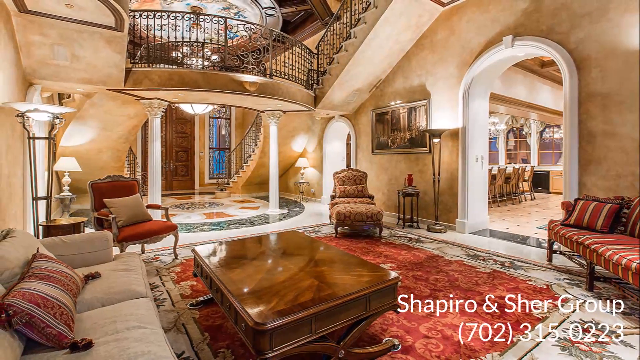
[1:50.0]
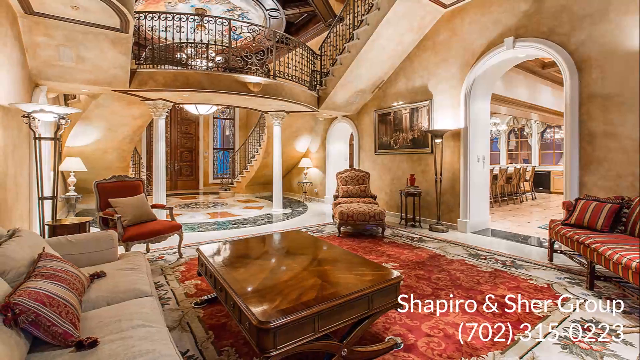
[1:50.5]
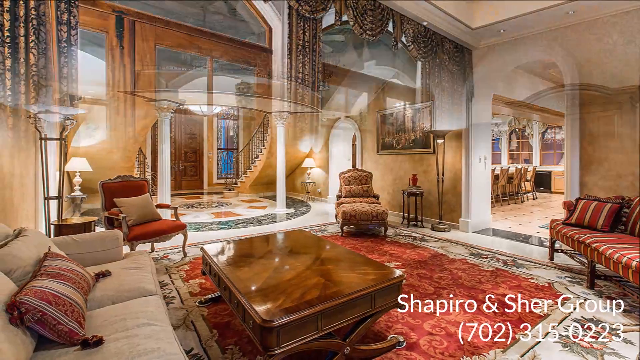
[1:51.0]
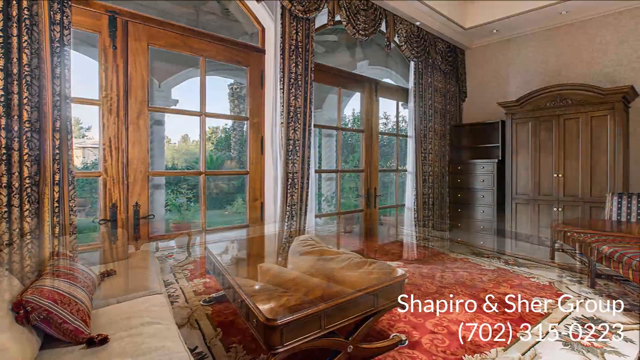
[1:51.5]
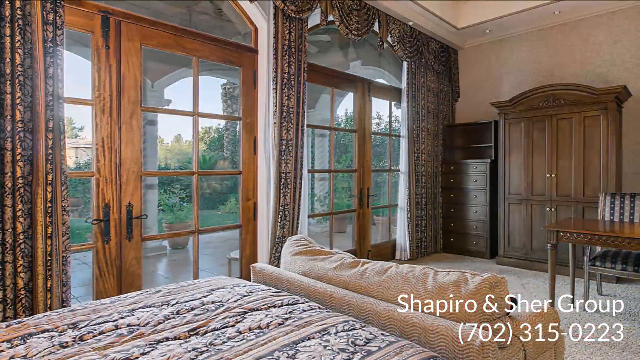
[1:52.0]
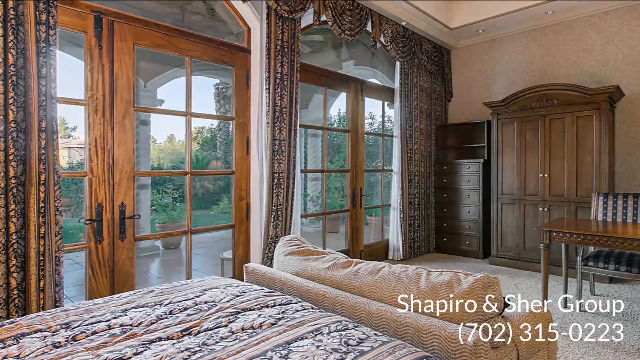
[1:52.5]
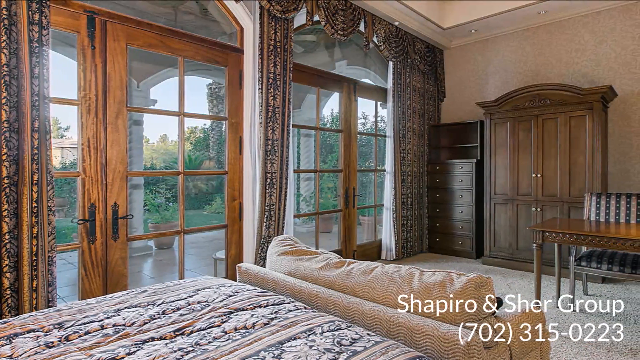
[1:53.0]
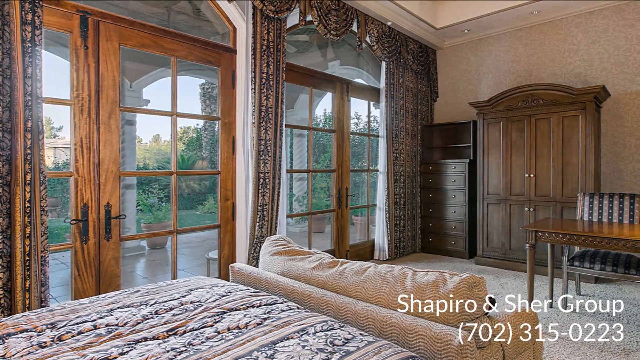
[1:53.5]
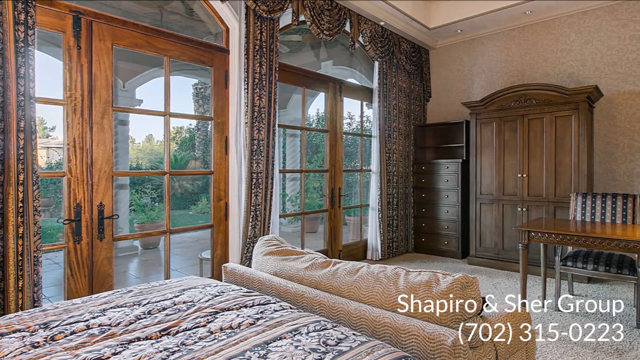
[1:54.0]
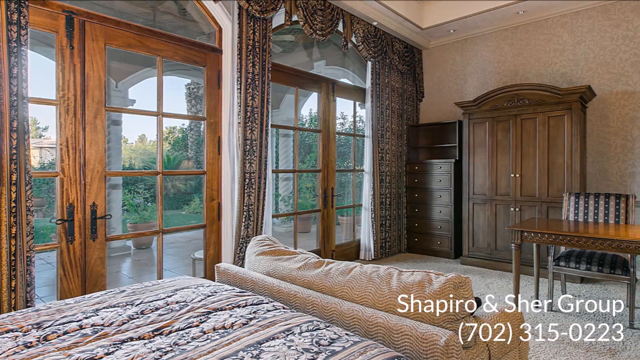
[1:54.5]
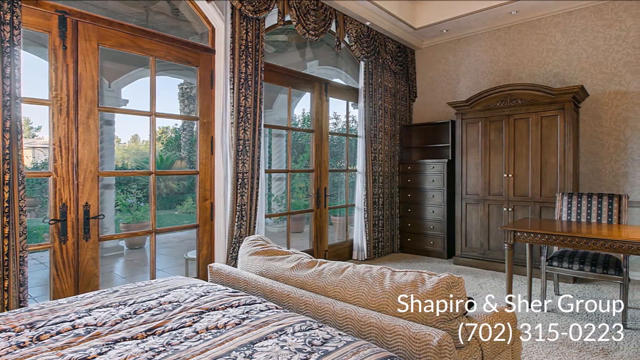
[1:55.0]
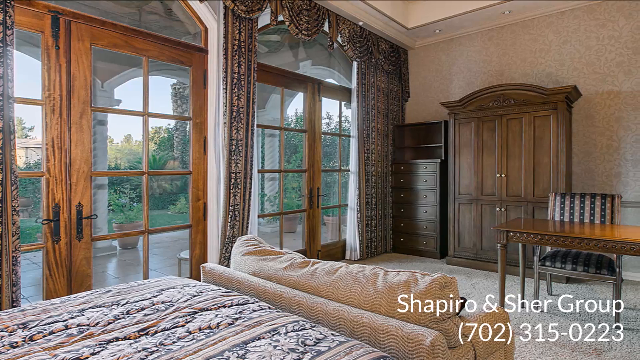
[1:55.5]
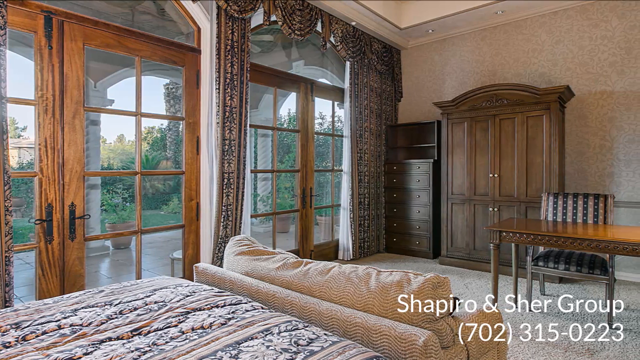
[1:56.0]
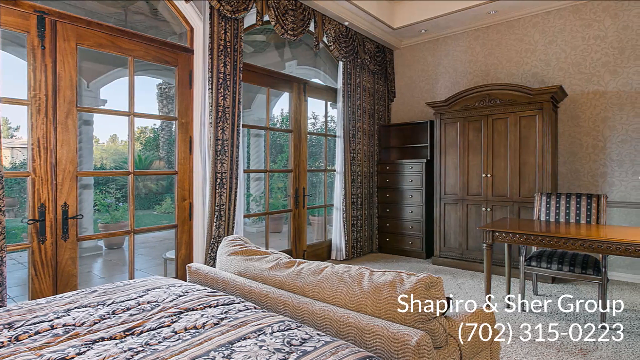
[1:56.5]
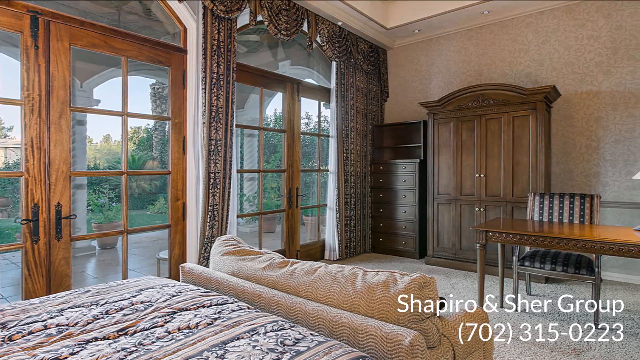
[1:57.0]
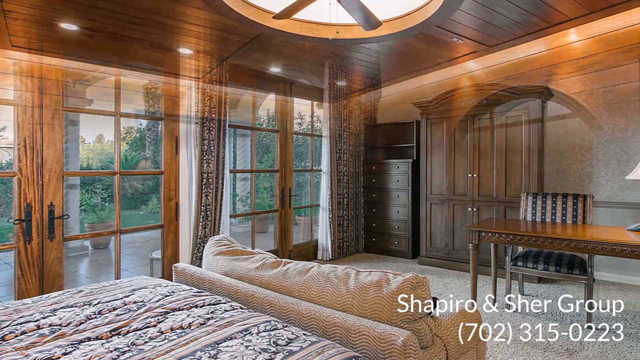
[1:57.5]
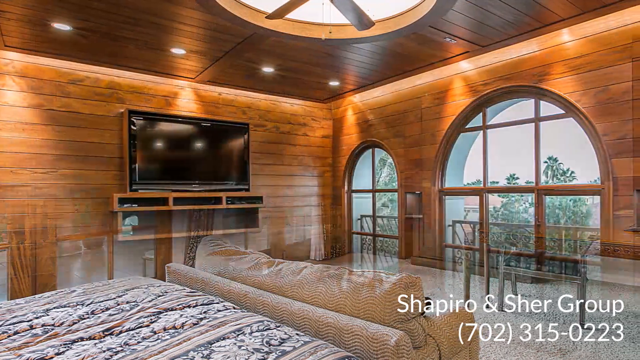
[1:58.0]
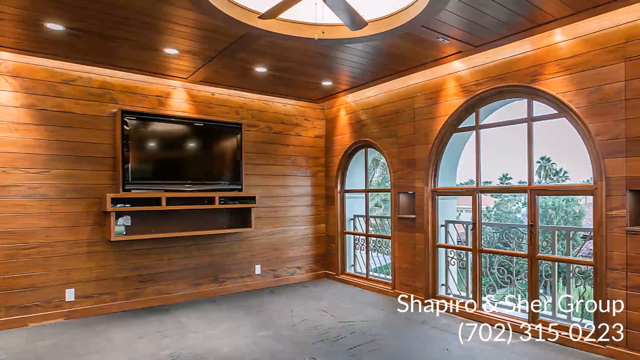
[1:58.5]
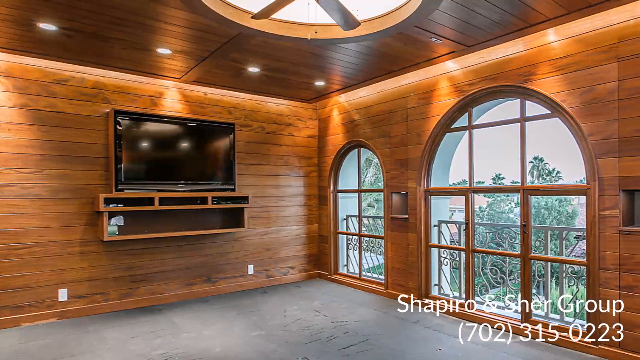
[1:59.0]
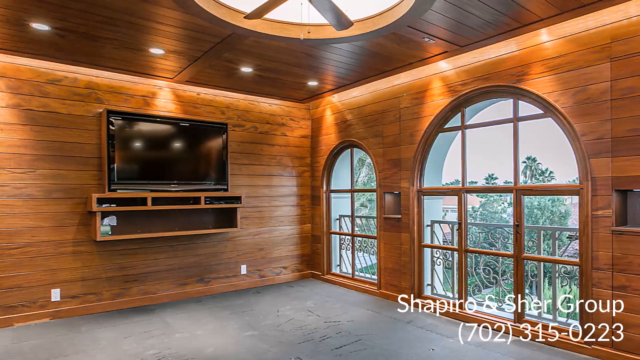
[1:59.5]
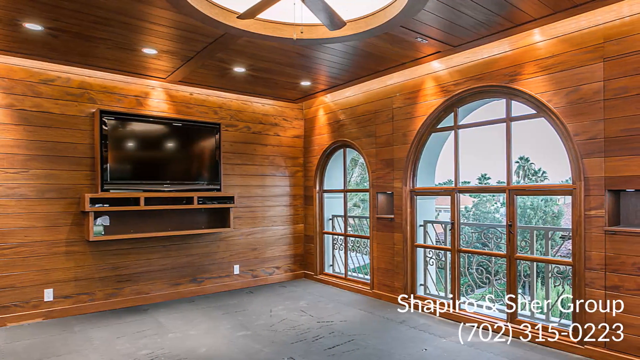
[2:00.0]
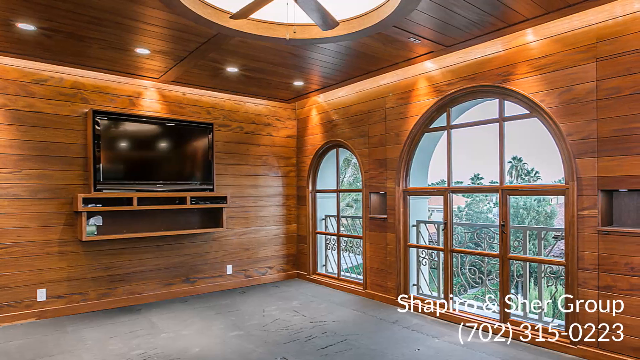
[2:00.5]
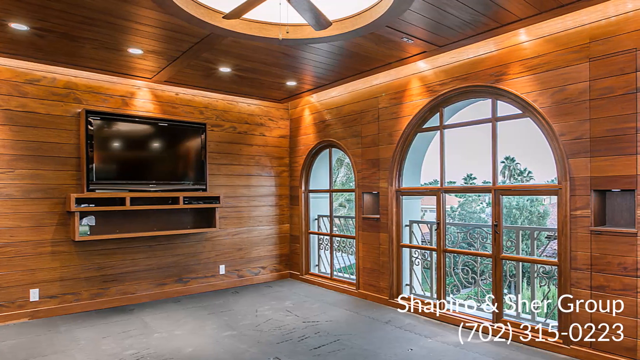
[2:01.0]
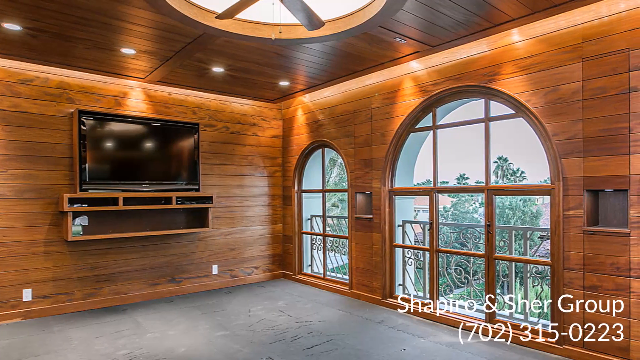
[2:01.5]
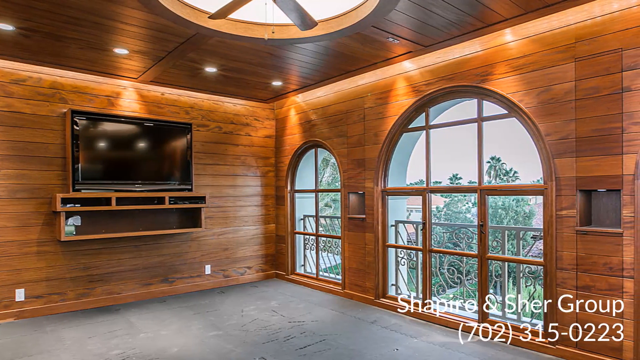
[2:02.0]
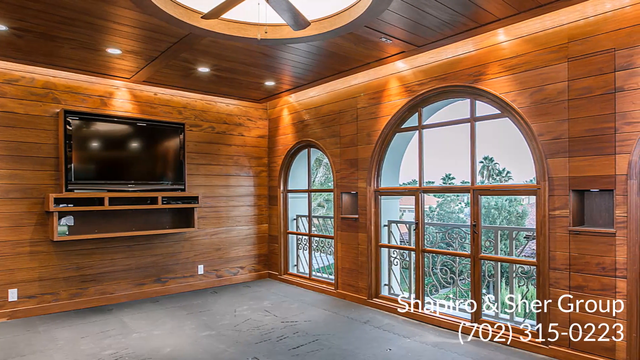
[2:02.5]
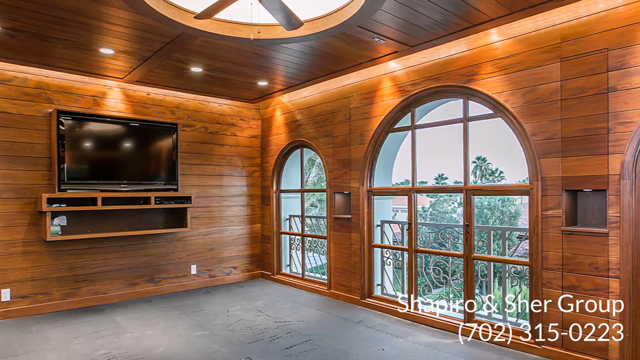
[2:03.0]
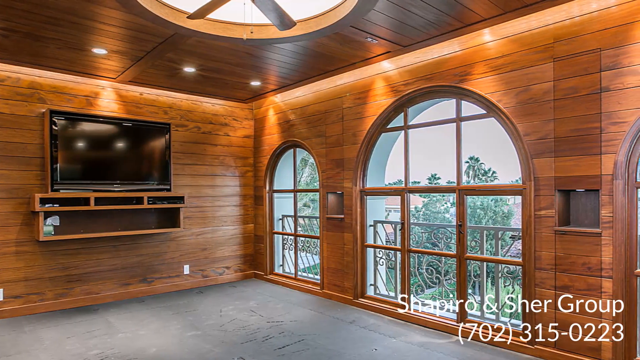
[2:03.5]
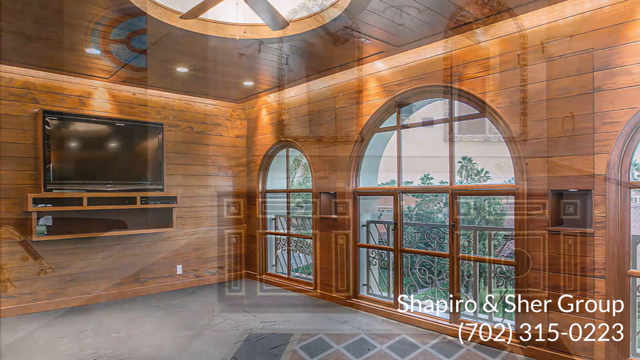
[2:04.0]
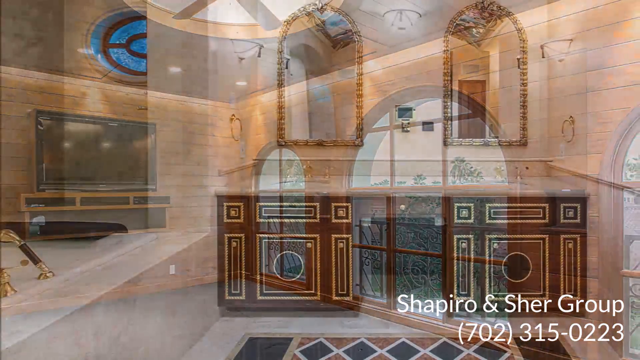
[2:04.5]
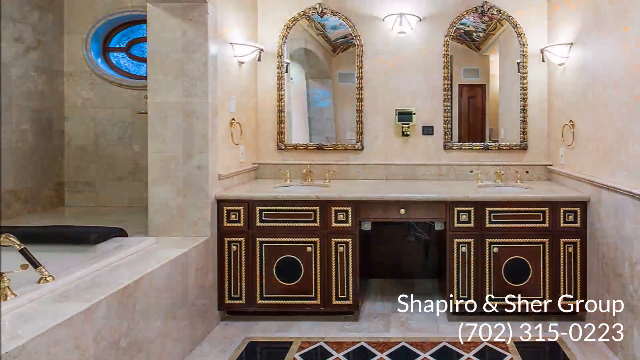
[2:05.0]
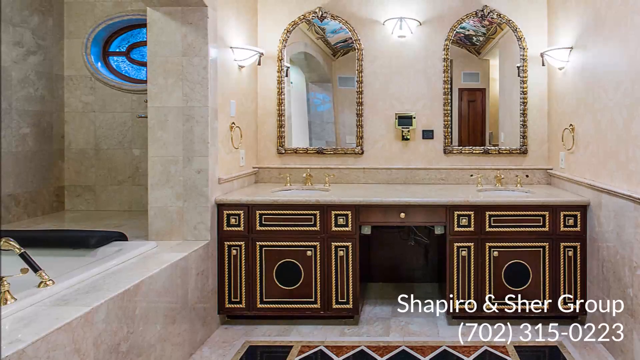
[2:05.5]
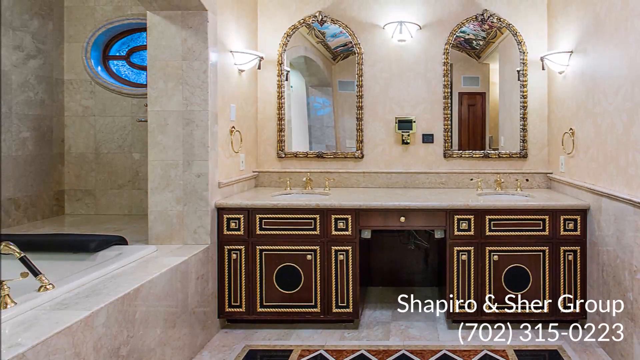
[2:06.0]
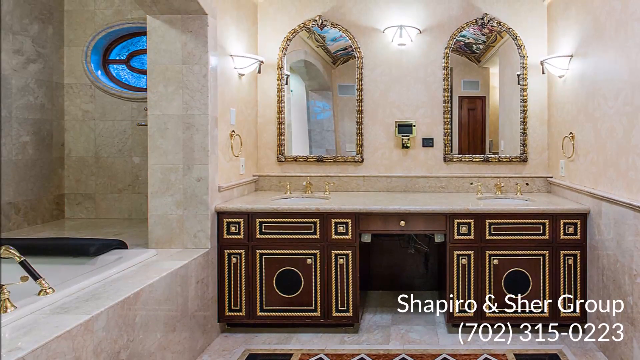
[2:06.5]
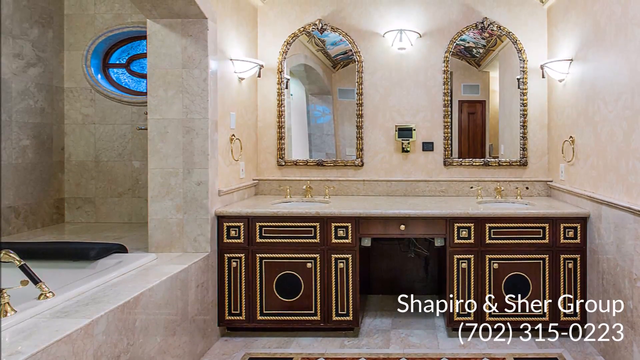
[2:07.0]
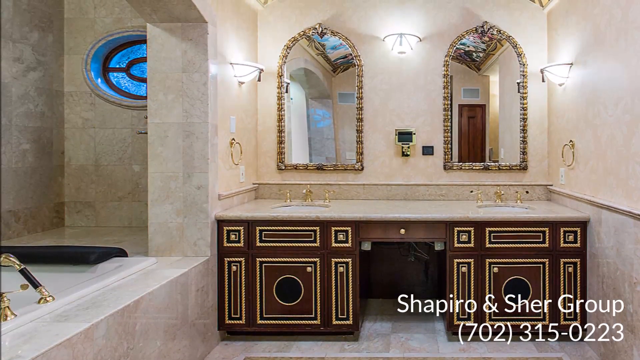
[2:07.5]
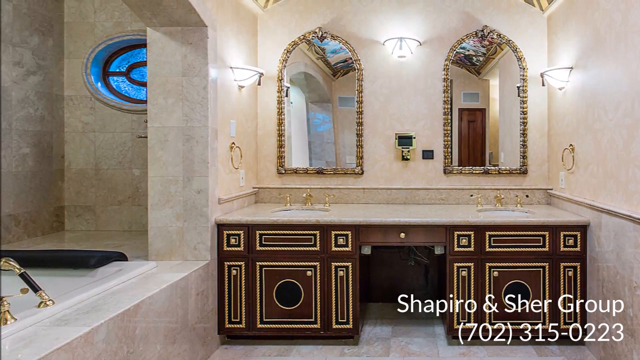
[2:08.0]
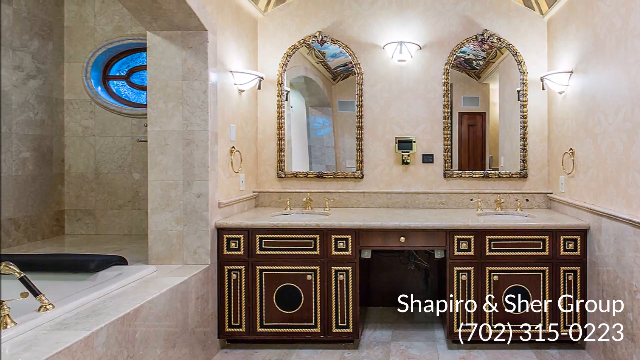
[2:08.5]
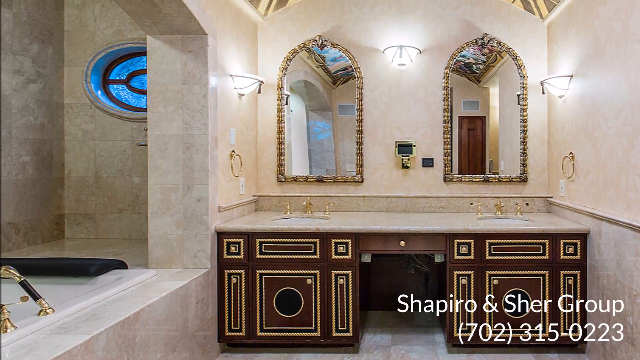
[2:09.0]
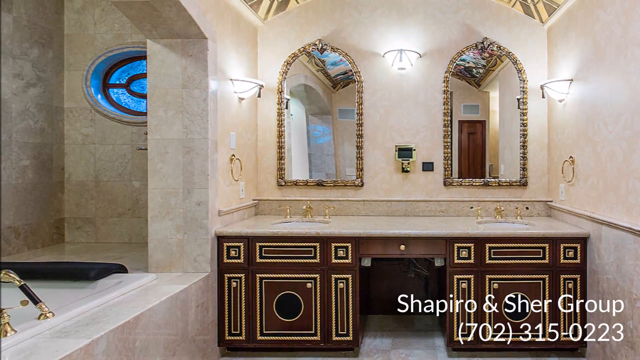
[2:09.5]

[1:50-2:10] A different room looks like a bedroom. The foot of a bed is in the bottom left corner, and next to the bed is a couch facing the opposite way, toward the right side. To the left are very large wooden glass door windows with the curtains pulled to the side, showing the outdoor scenery: a lot of green trees, a plant in a pot, and green grass. To the right side is a desk with a chair. The scene then changes to another room with wooden walls, where a TV is in the middle to the left.